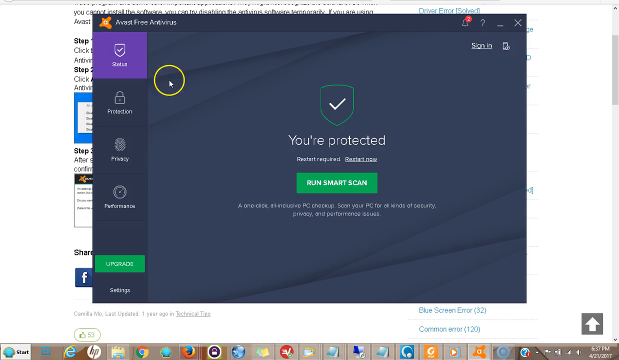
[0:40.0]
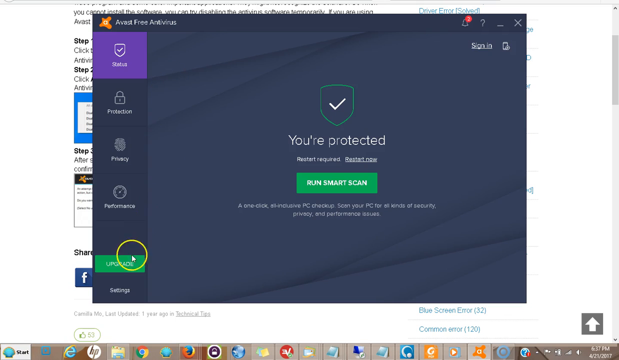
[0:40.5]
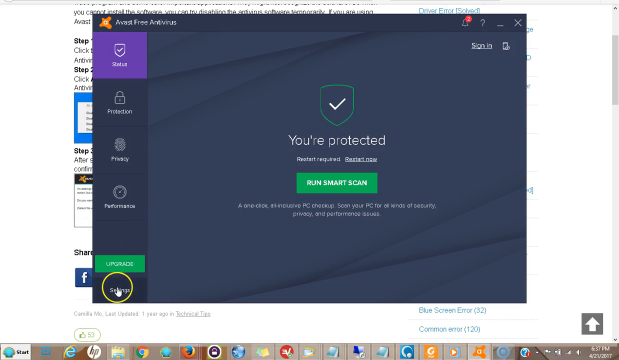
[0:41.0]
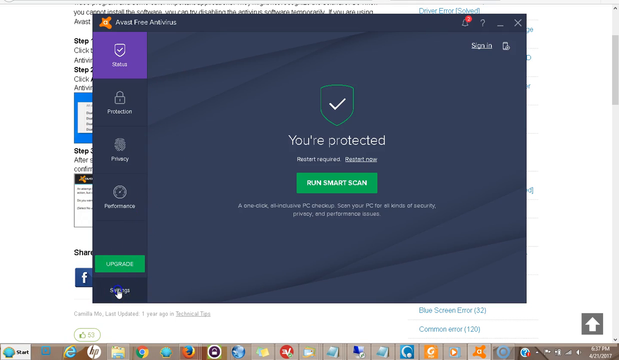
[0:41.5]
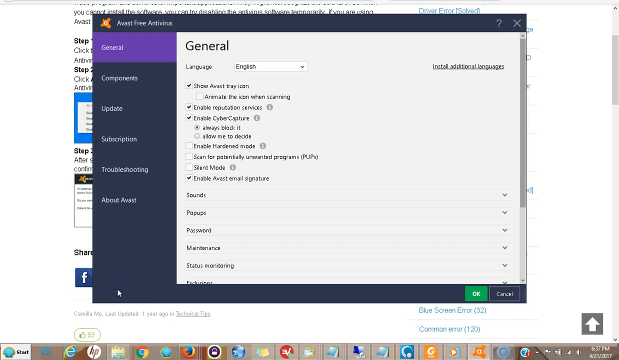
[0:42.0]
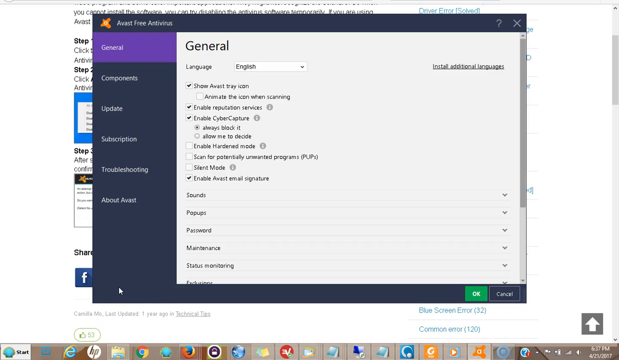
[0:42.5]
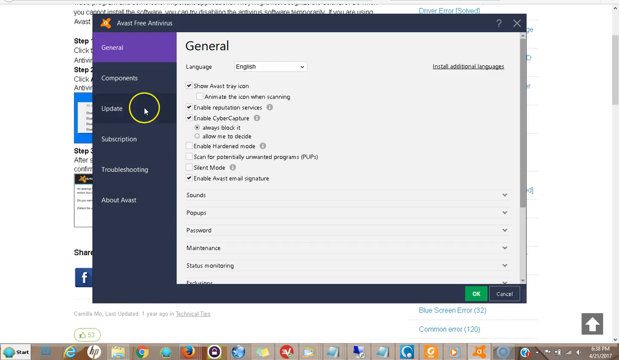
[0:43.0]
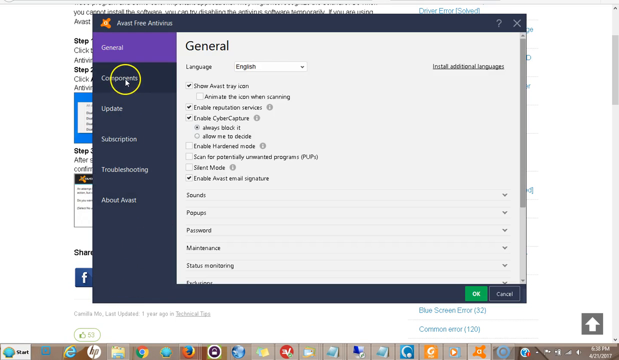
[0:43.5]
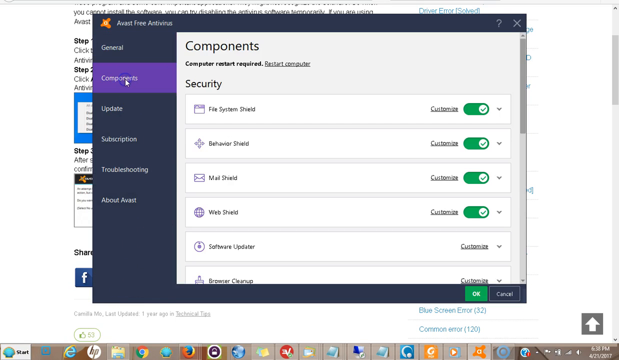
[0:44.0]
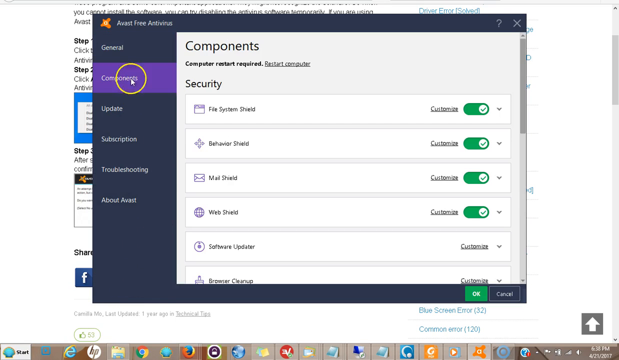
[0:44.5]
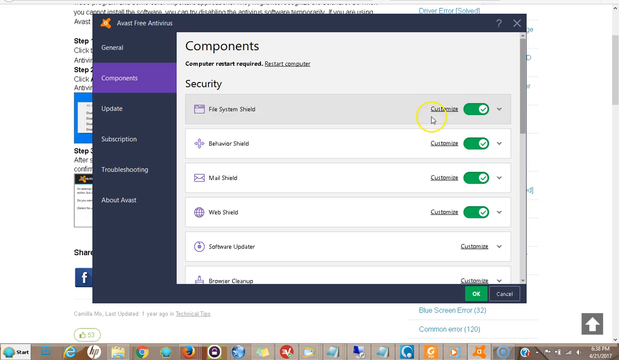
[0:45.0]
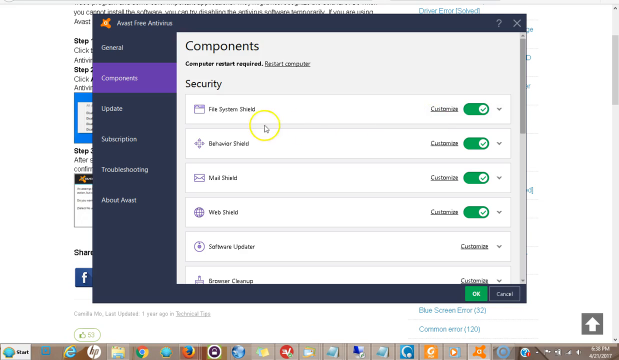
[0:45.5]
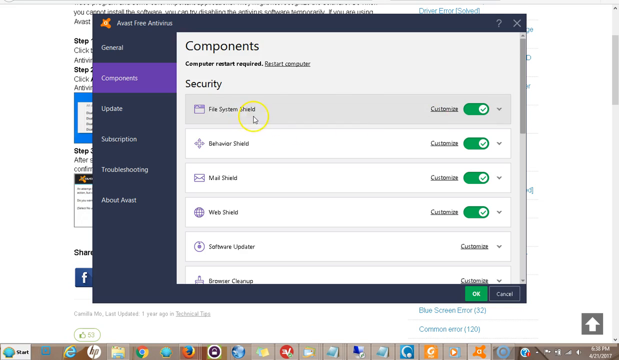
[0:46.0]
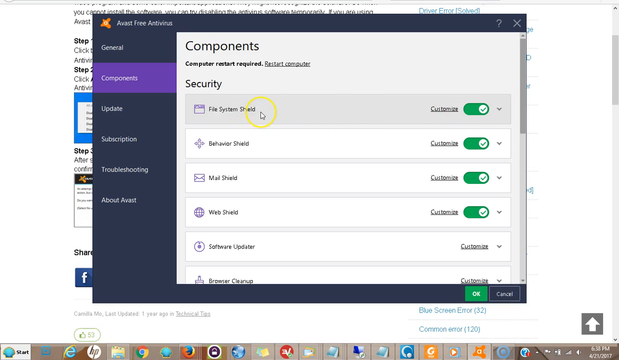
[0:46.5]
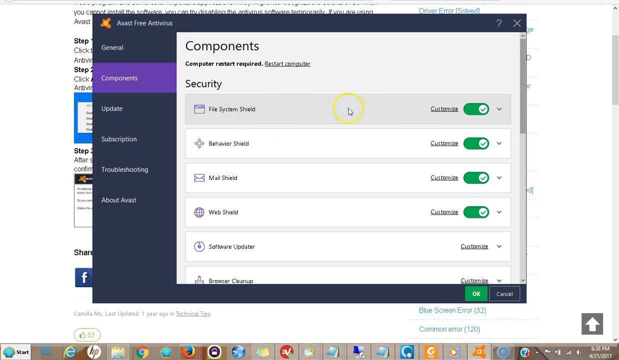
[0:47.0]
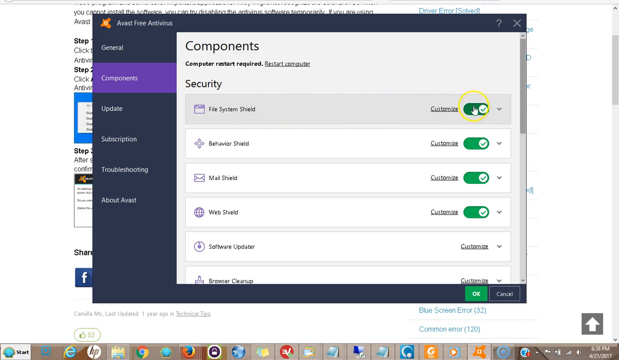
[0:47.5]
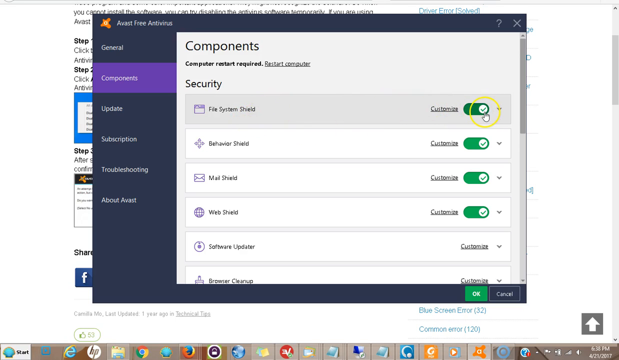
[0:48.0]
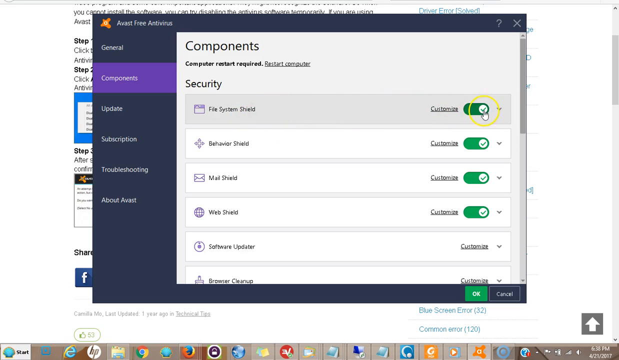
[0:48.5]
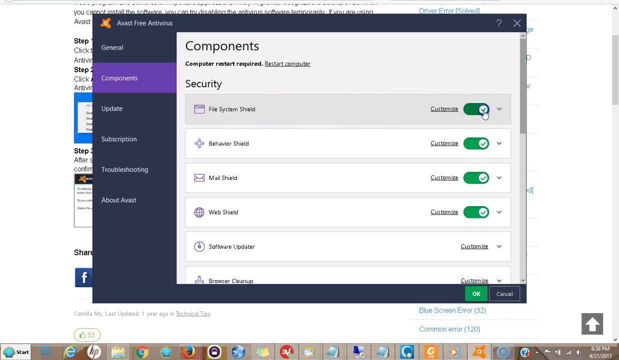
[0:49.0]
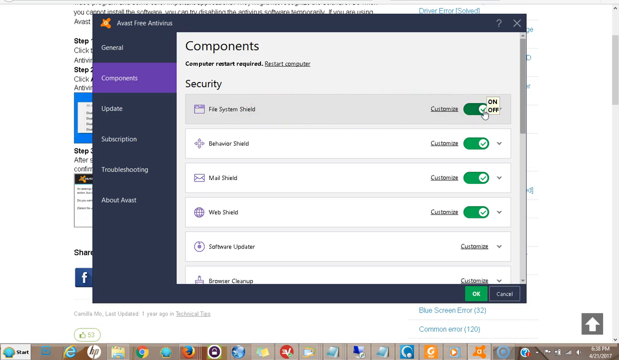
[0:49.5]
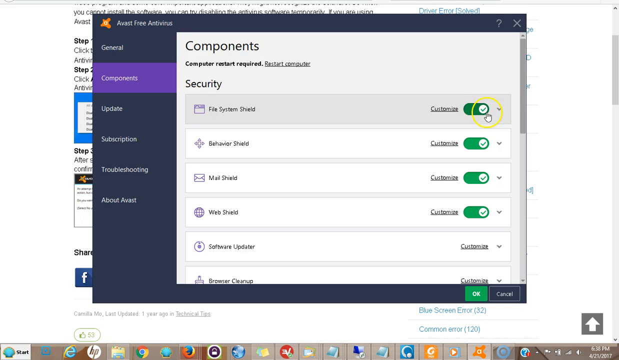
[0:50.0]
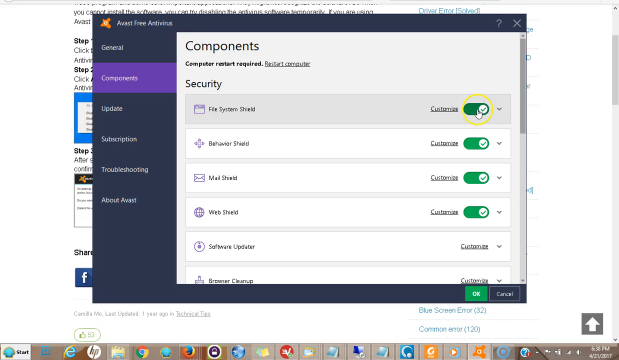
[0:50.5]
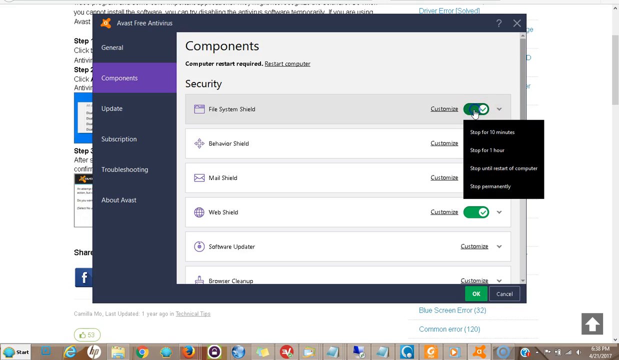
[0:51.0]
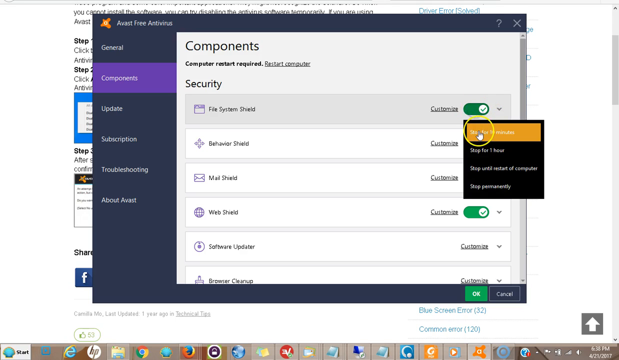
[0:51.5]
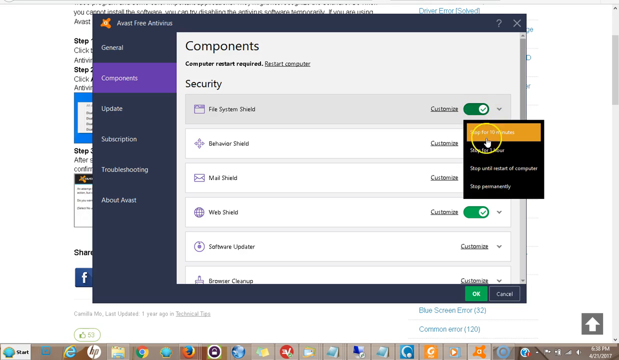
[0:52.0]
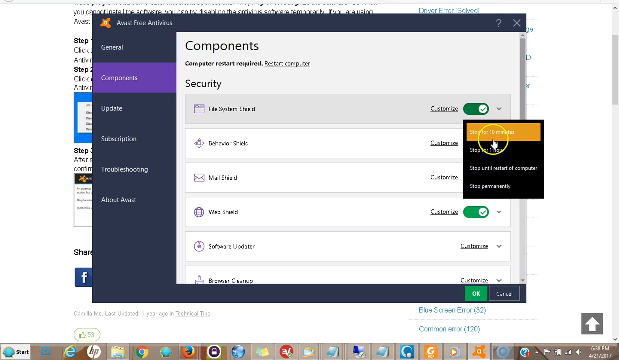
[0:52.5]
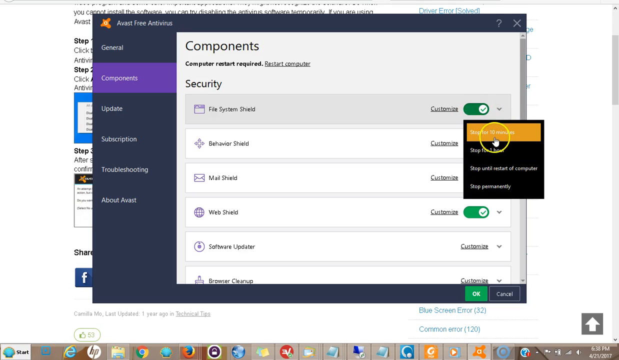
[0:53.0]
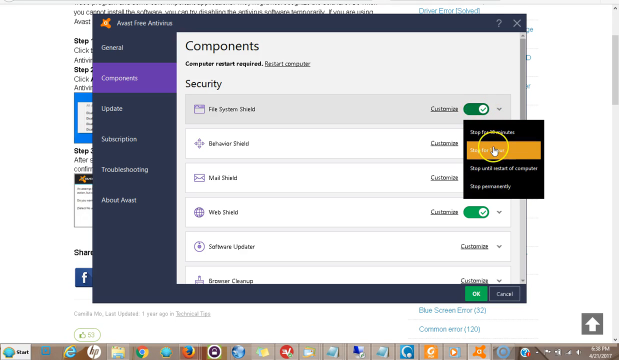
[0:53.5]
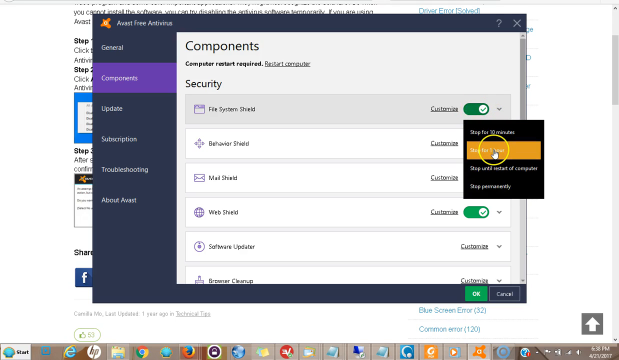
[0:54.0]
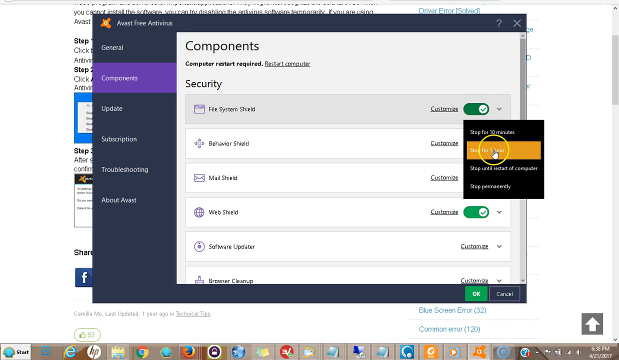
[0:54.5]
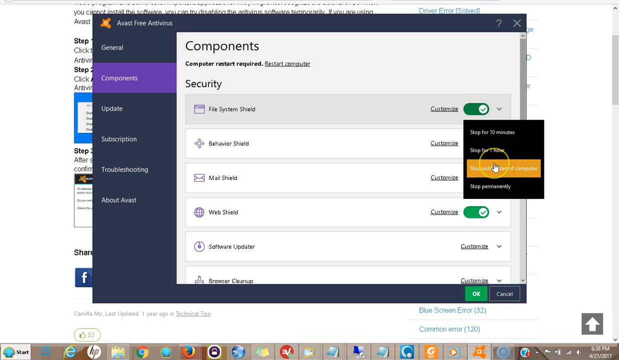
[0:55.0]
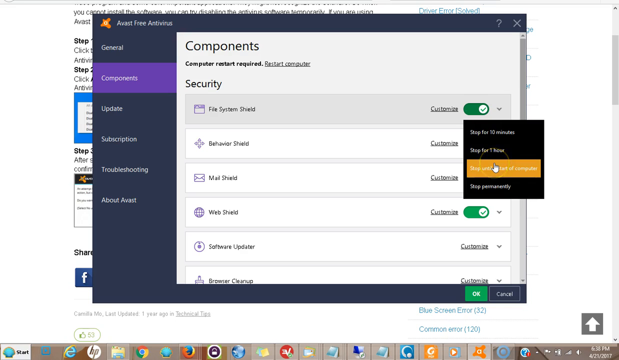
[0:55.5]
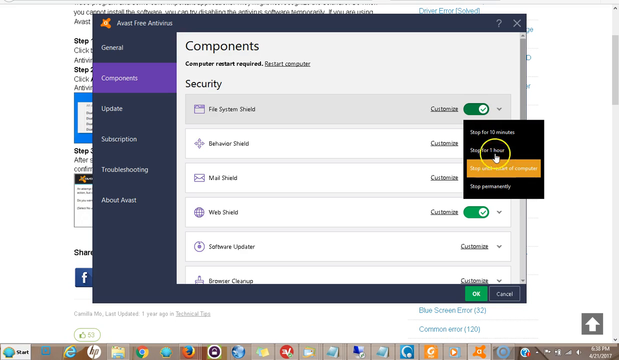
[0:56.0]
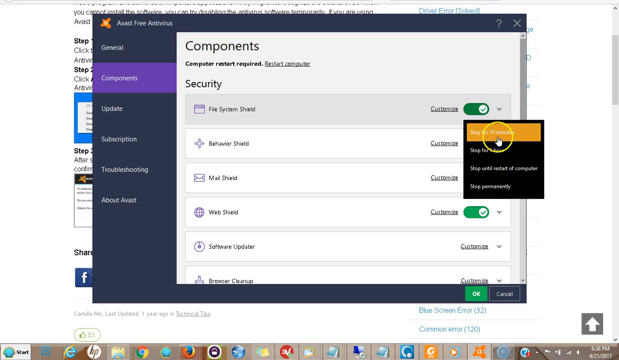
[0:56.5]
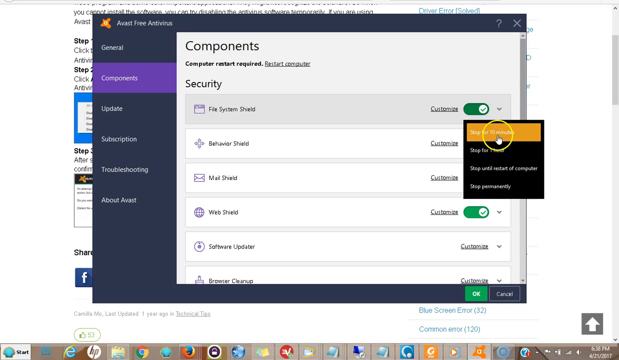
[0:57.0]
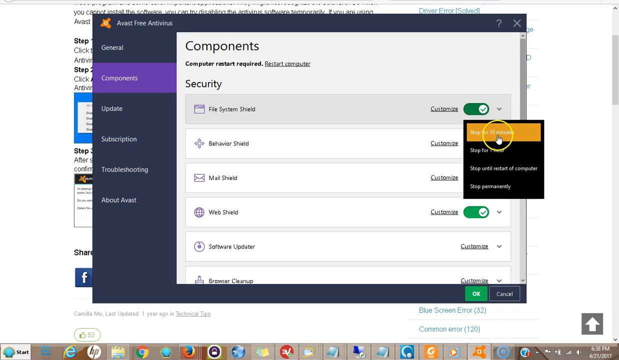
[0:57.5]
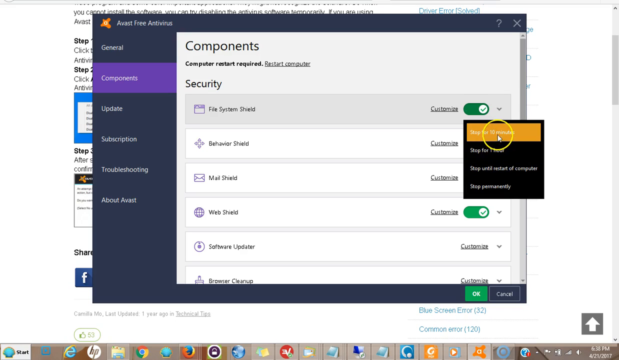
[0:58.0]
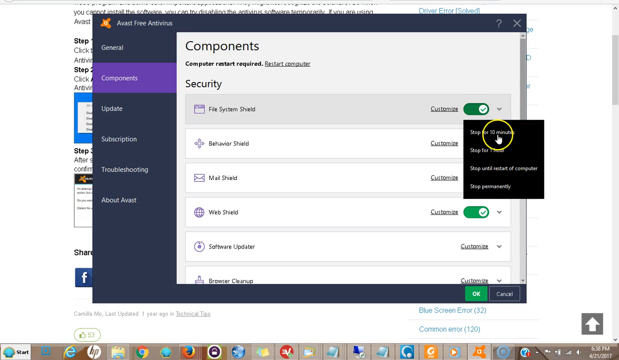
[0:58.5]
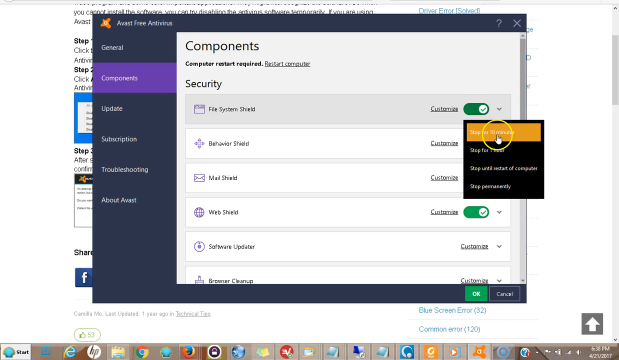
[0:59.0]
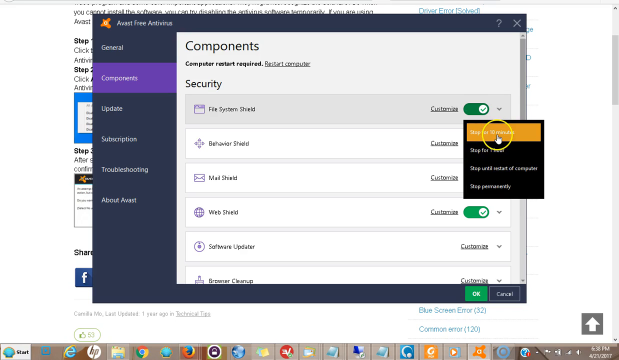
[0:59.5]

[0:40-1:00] The user's mouse cursor moves in, surrounded by a yellow ring. The cursor moves down to the settings option and clicks it. The screen changes to the settings, with multiple tabs on the left: general, components, update, subscription, troubleshooting, and about Avast. The user clicks on components; just below the title "components" it says "computer restart required," with a button to restart the computer. Below are a number of security options. The first, file system shield, is on, with a check mark to the right, a customize button to the left of it and a drop-down arrow to the right of it. Behavior shield, mail shield and web shield follow with the same design. After those comes software updater, which has no check mark, and below it browser cleanup, which has no check mark either. The user clicks the check mark on the file system shield, revealing options to stop it for a certain amount of time, and clicks the option to stop it for 10 minutes.